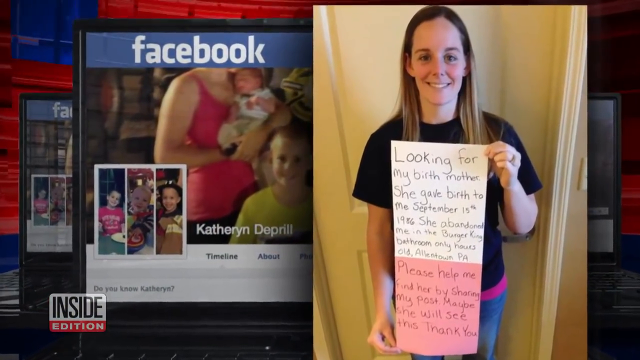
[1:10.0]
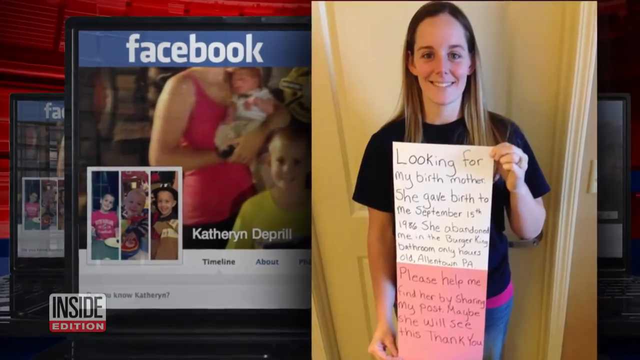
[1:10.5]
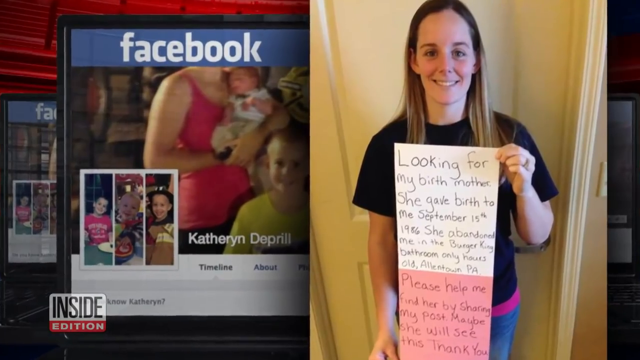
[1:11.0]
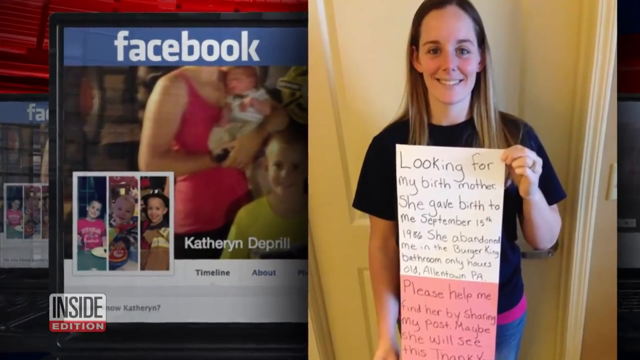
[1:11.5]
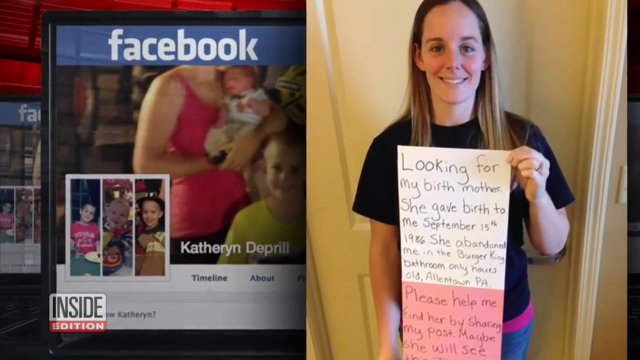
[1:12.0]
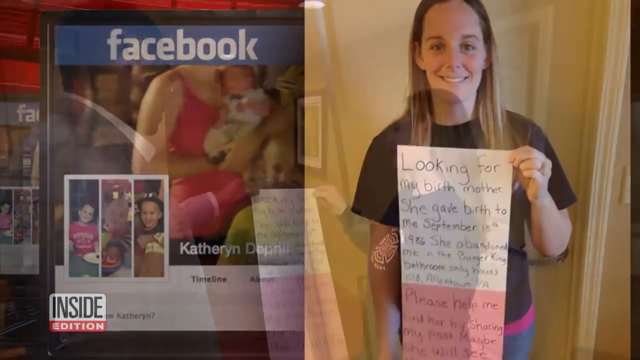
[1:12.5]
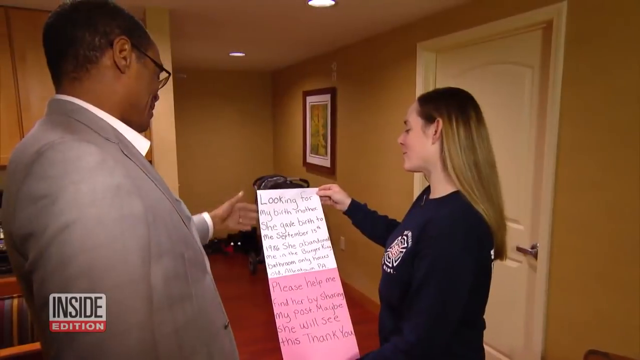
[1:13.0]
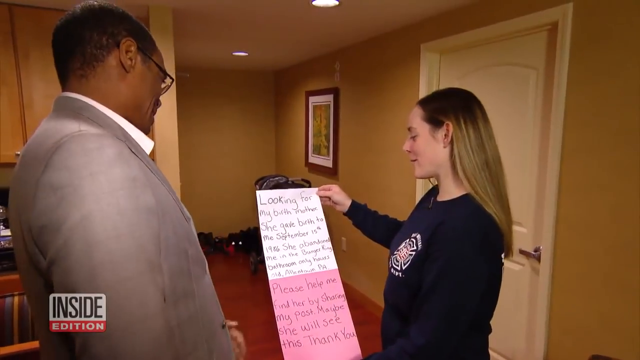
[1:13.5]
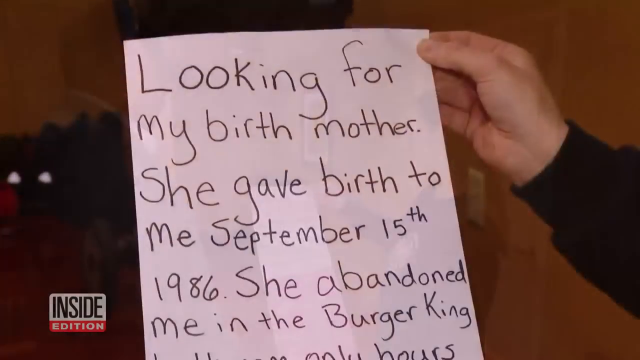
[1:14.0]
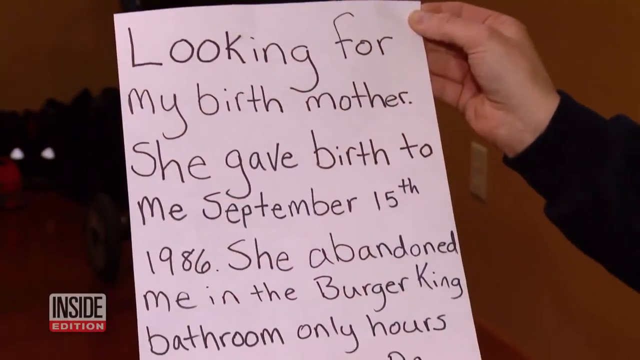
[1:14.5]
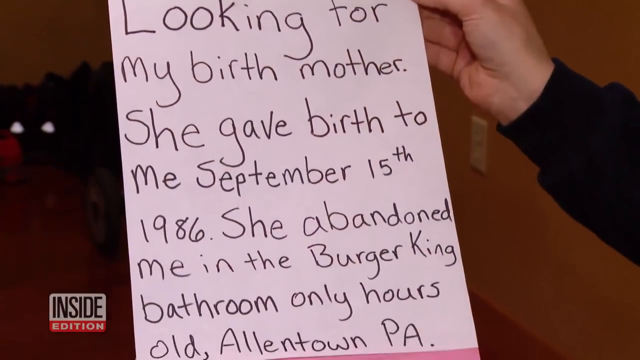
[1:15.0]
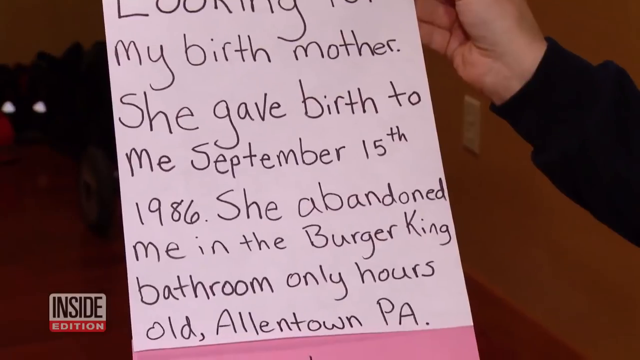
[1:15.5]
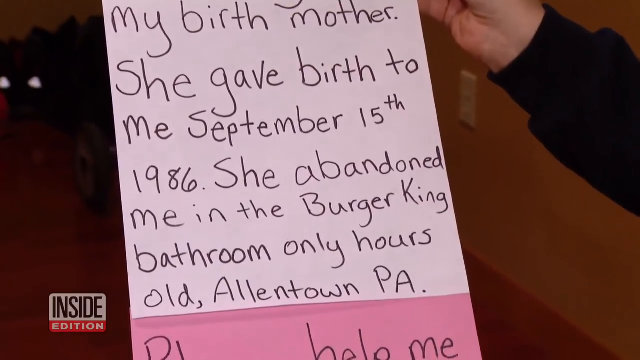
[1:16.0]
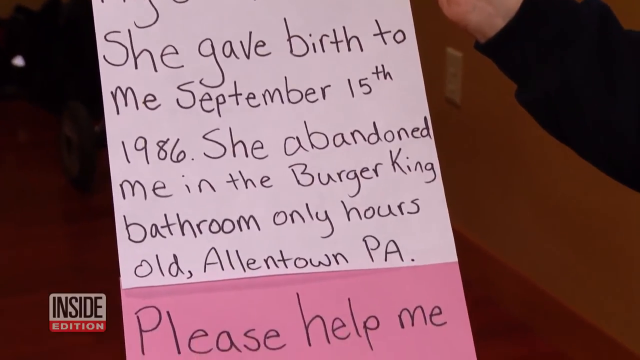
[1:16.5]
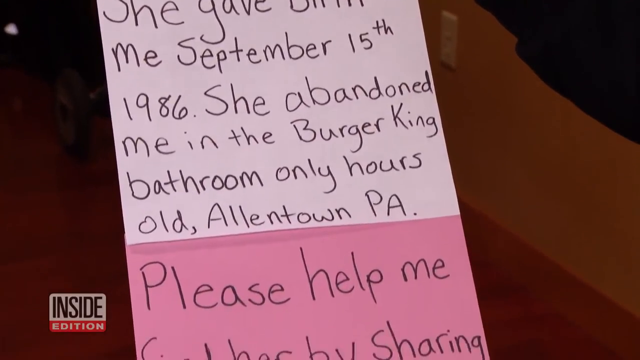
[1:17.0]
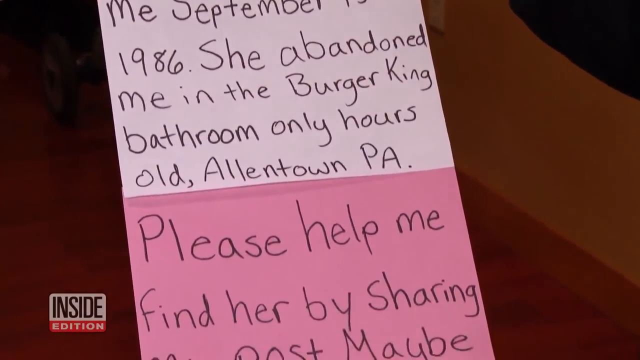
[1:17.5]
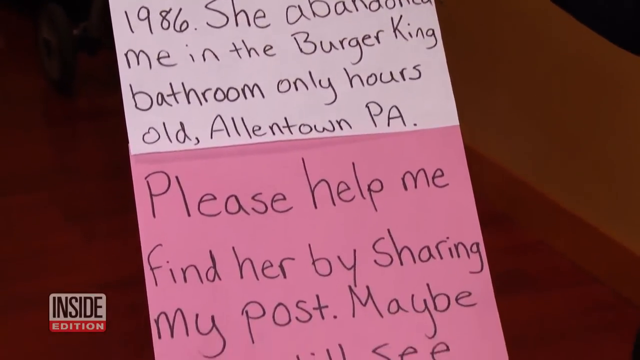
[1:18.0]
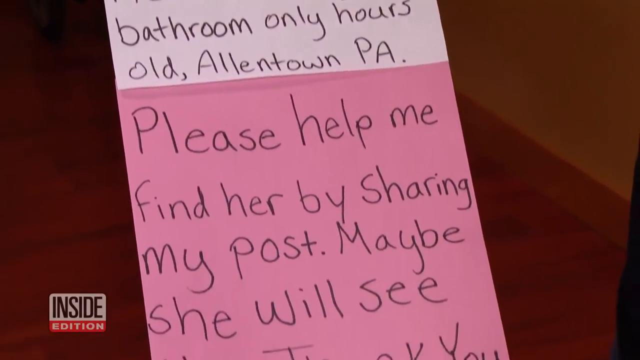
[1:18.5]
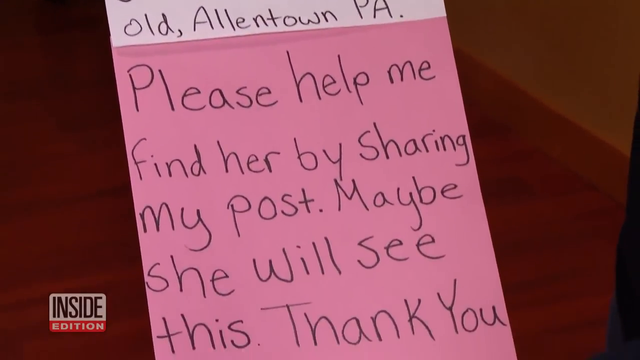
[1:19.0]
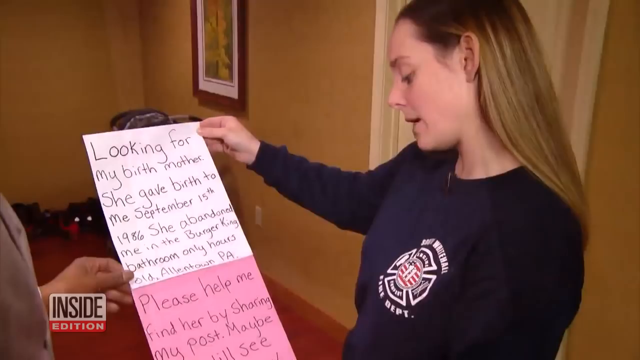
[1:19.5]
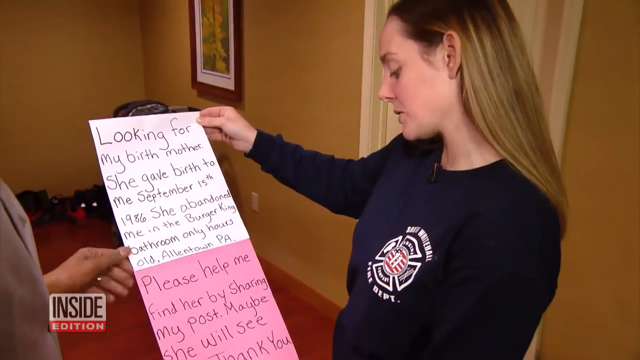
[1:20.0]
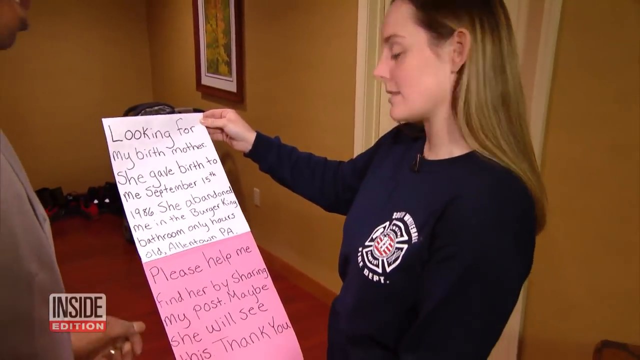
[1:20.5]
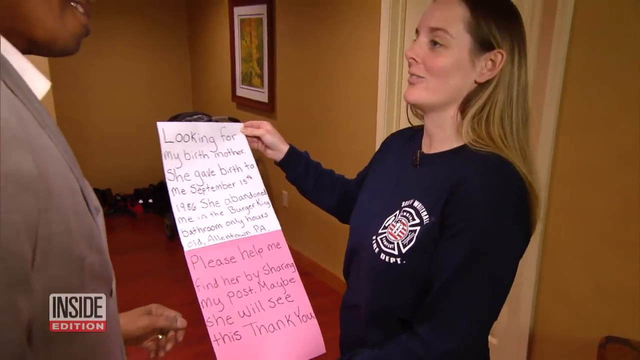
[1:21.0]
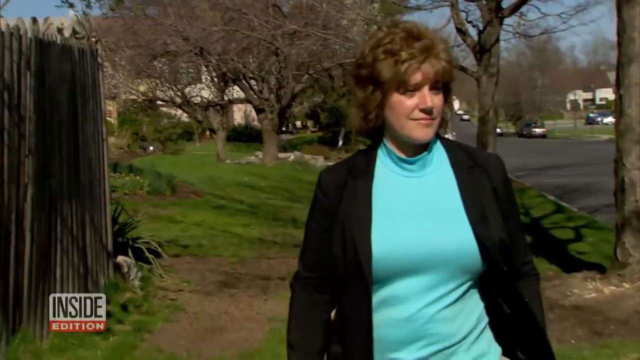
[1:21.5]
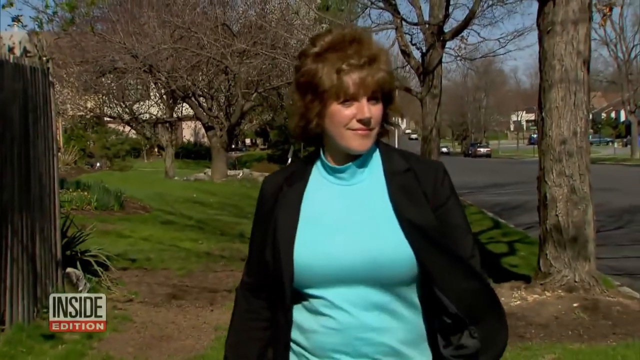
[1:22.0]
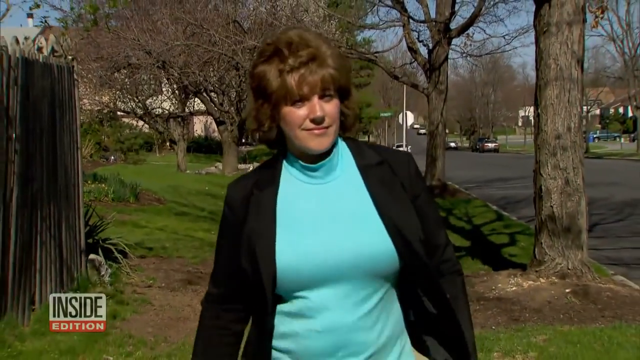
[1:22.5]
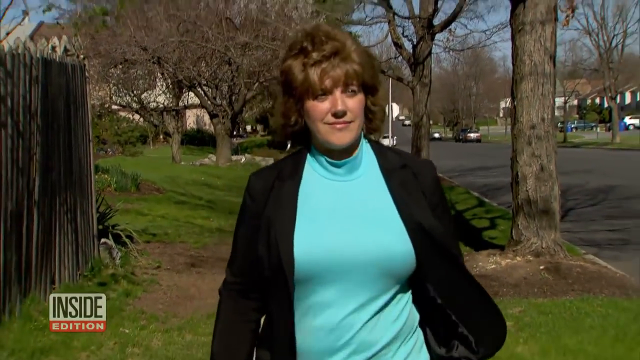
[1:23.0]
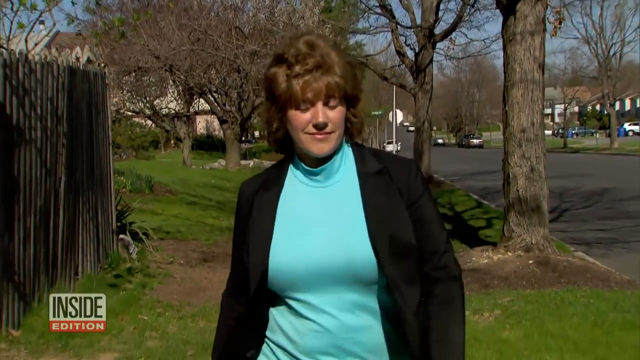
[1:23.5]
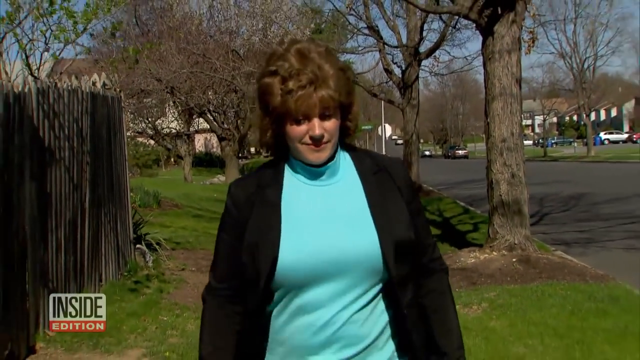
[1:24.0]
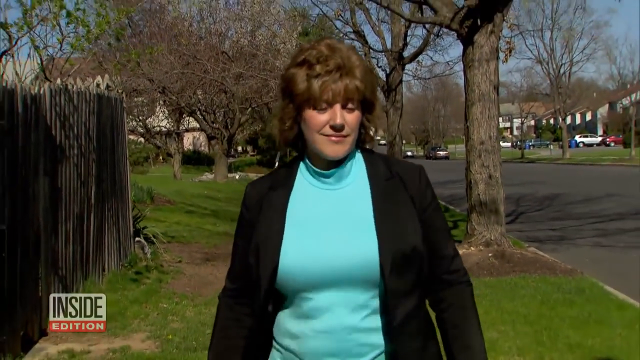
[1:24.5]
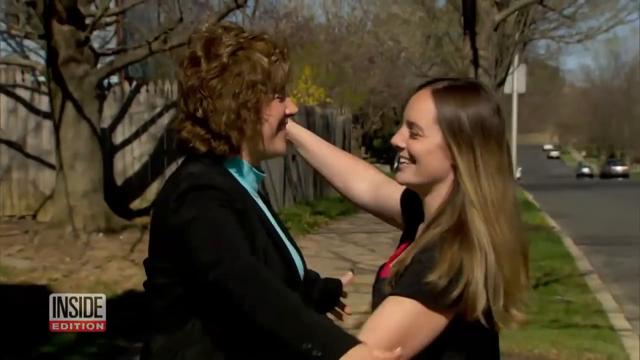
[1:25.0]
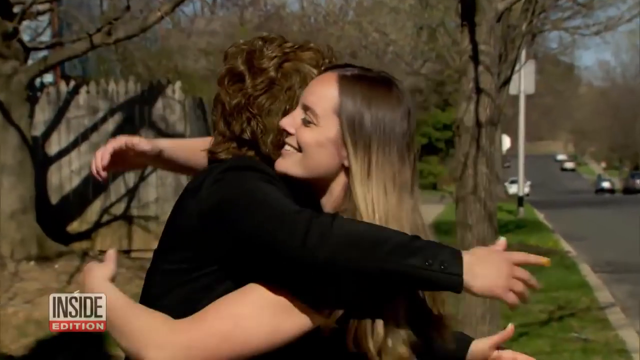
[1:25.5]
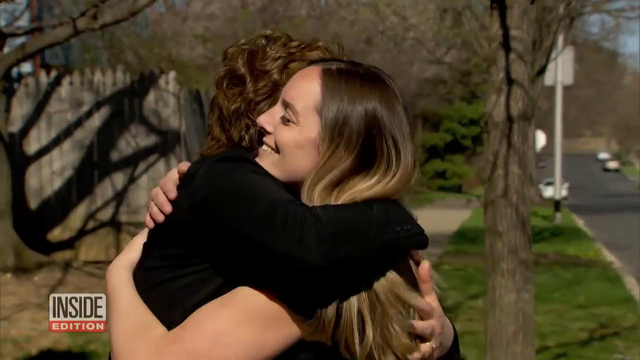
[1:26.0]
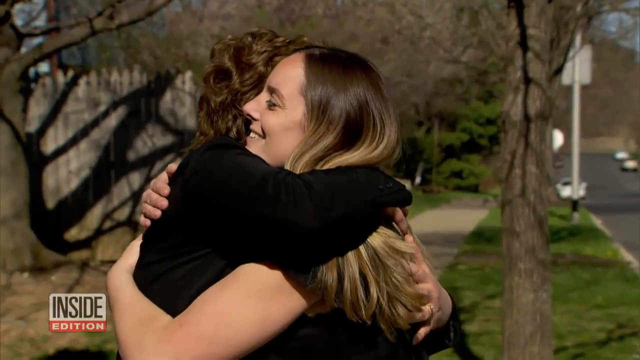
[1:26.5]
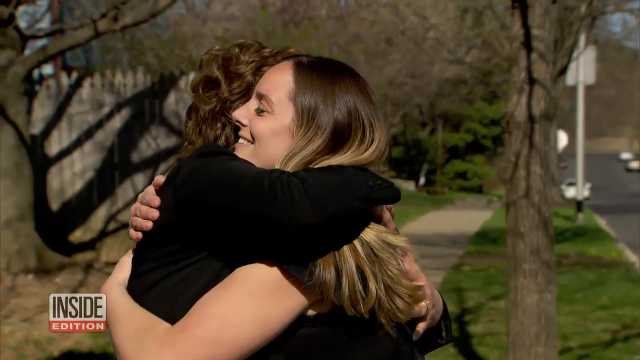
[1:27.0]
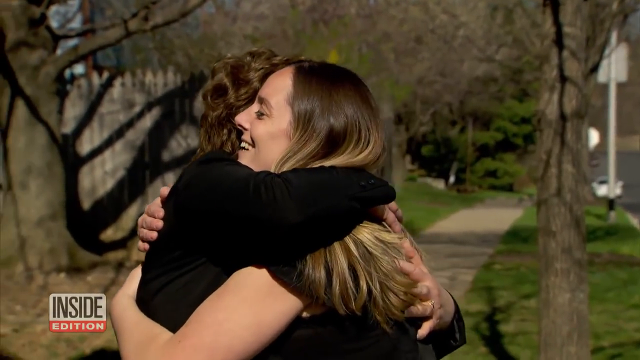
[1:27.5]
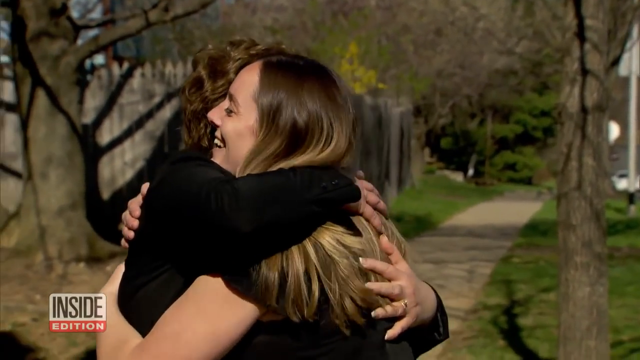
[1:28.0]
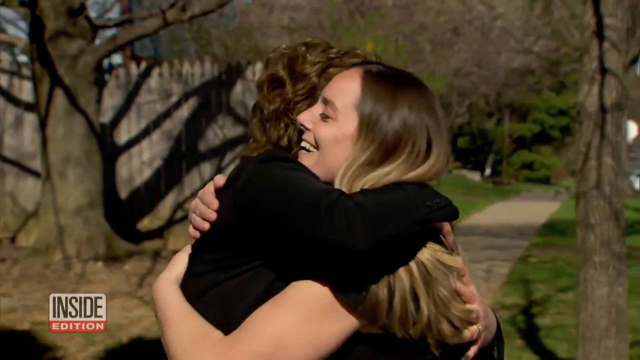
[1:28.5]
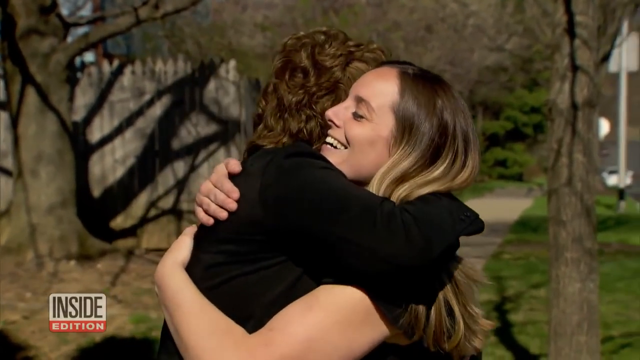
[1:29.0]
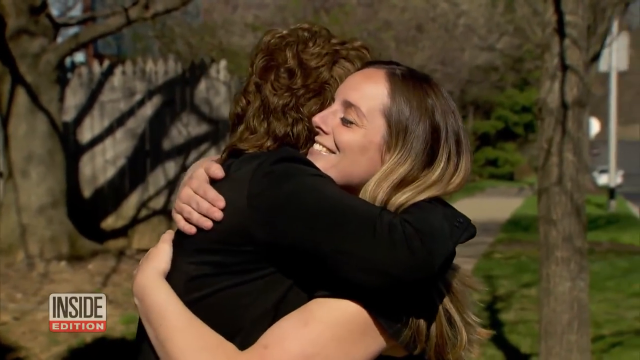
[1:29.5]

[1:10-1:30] The adult woman who was abandoned as a baby in a Burger King bathroom holds a long handwritten note that reads "Looking for my birth mother. She gave birth to me September 15th, 1986. She abandoned me in the Burger King bathroom. Only hours old, Allentown, Pennsylvania. Please help me find her by showing my post. Maybe she will see this." Next to her is a Facebook profile, presumably hers and her family's; she has children. A middle-aged woman with wavy hair walks down the street and talks to the camera for a moment. The woman who was abandoned as a baby then walks up to her and hugs her at length, smiling; it looks like she has found her birth mother through Facebook and been reunited with her. The video cuts back to the Facebook post and the sign she held in it.